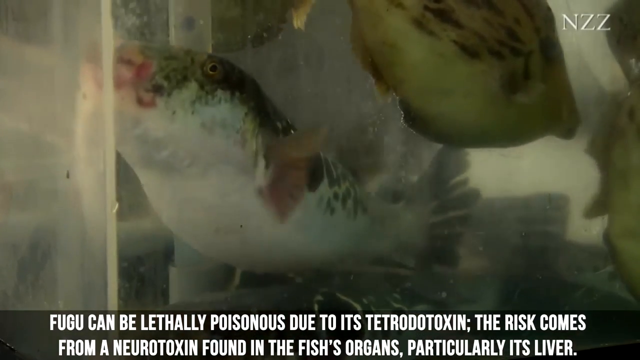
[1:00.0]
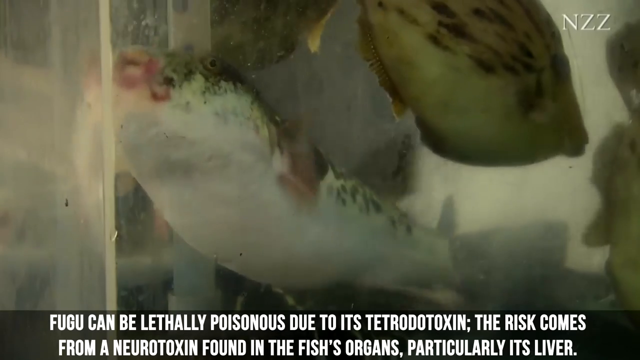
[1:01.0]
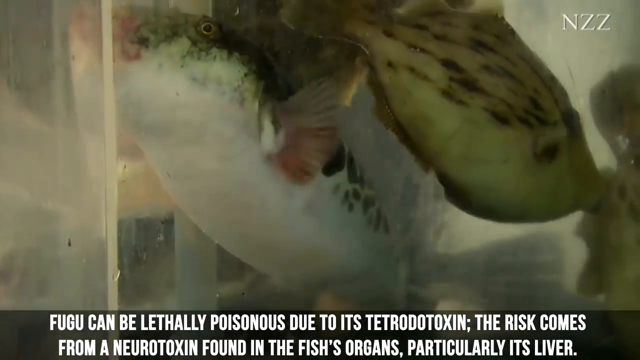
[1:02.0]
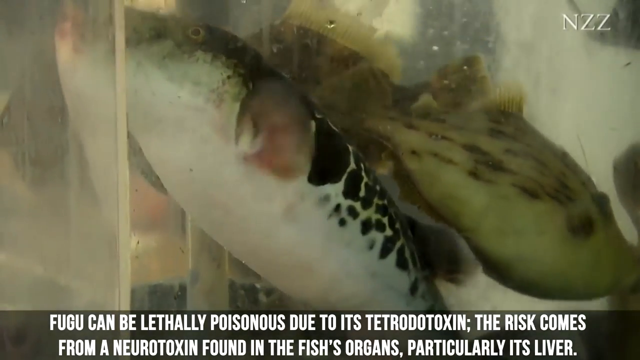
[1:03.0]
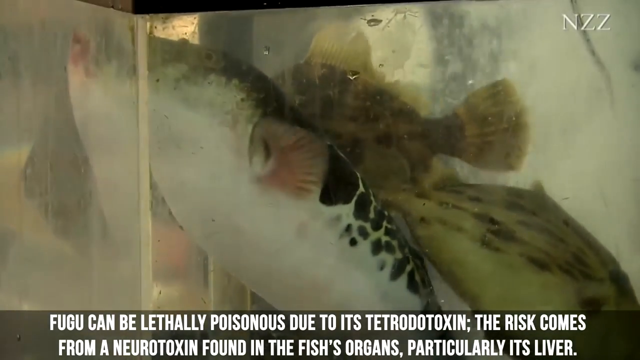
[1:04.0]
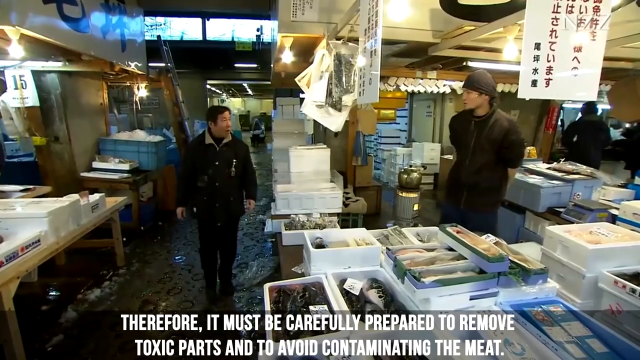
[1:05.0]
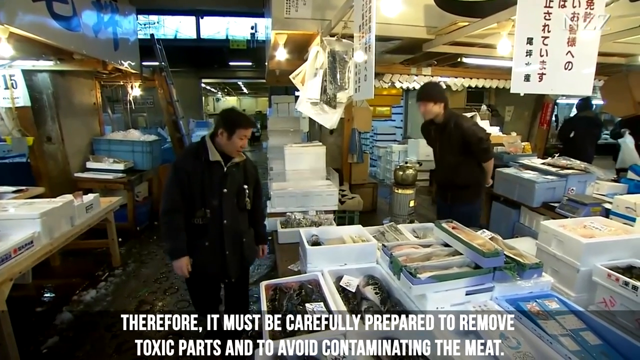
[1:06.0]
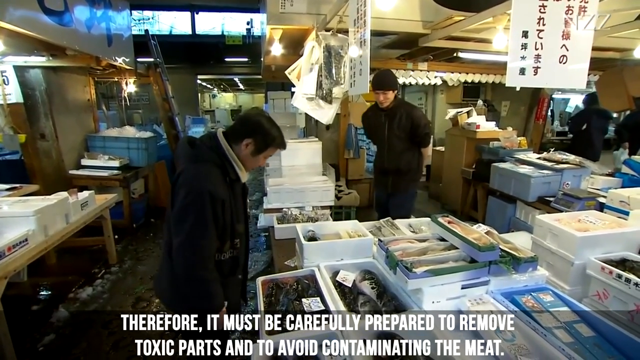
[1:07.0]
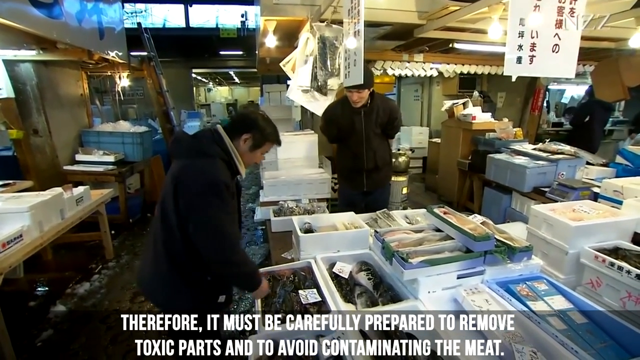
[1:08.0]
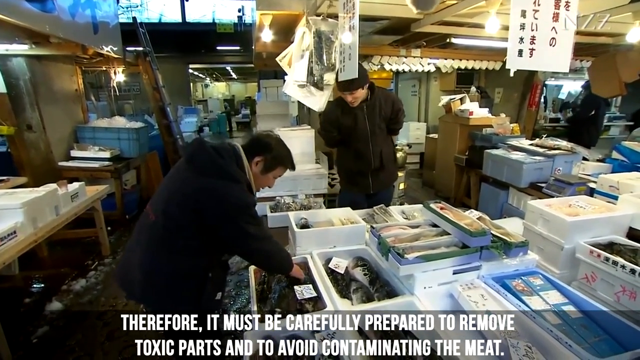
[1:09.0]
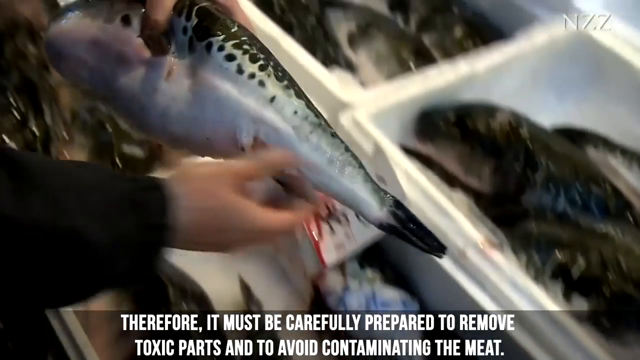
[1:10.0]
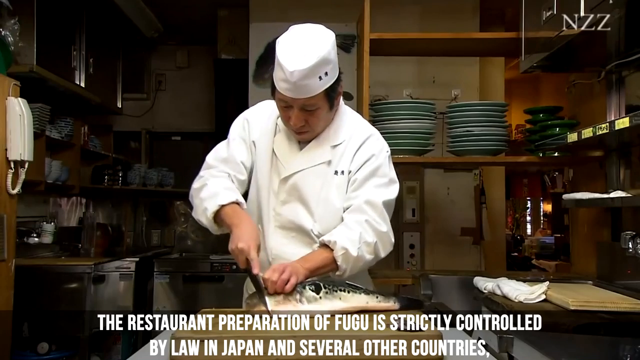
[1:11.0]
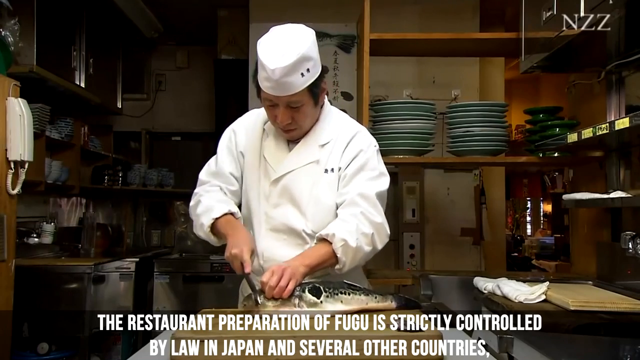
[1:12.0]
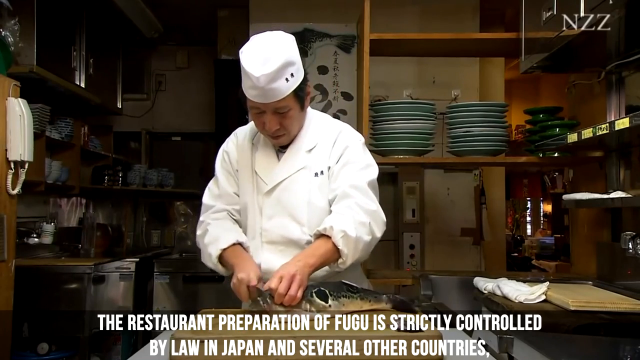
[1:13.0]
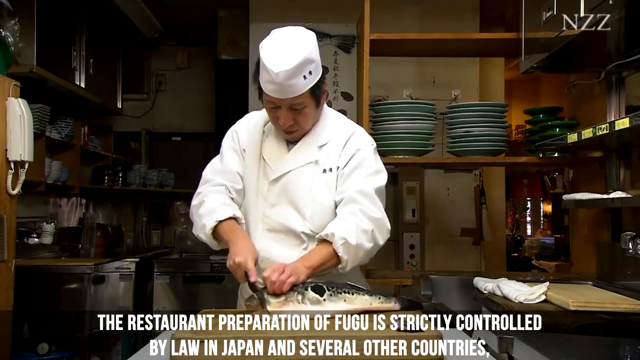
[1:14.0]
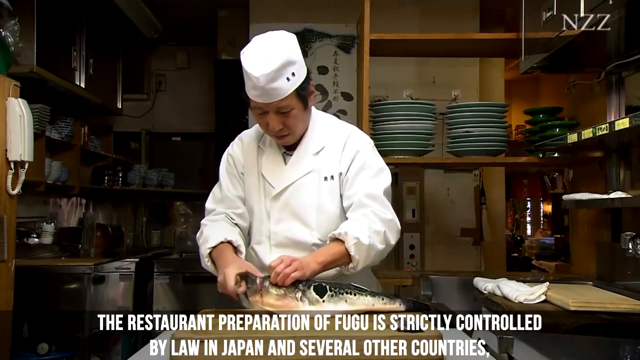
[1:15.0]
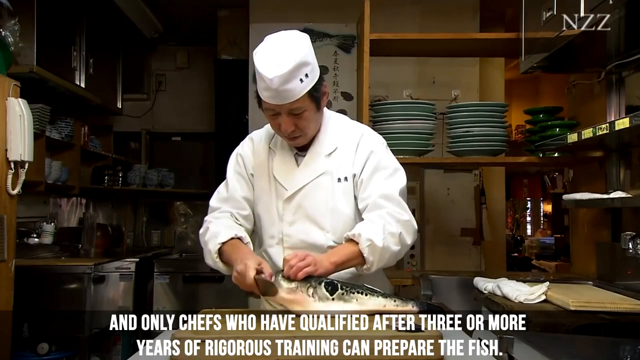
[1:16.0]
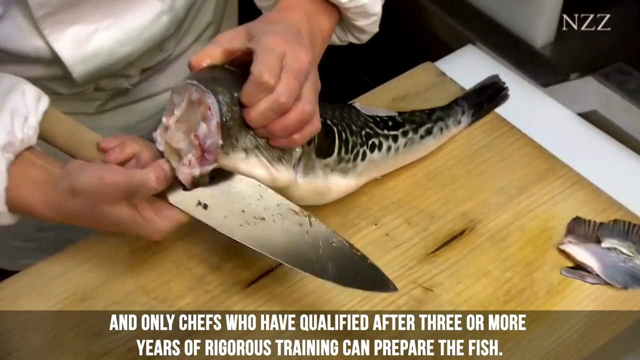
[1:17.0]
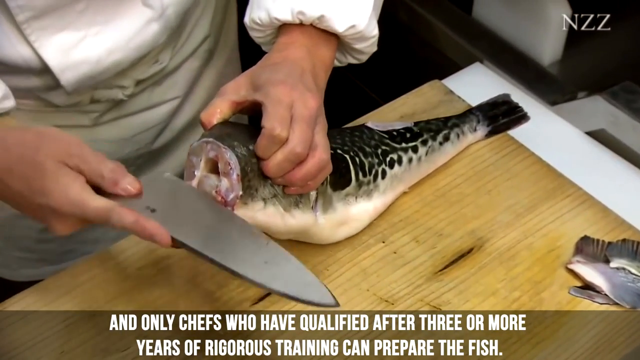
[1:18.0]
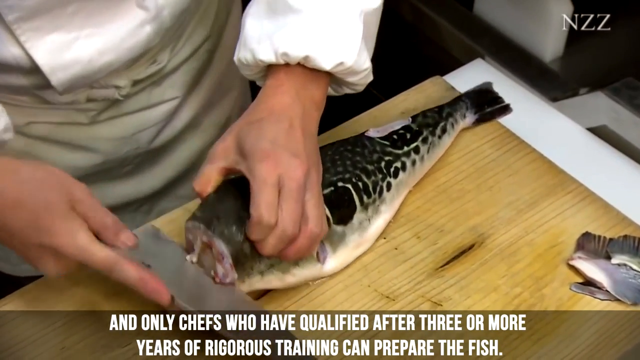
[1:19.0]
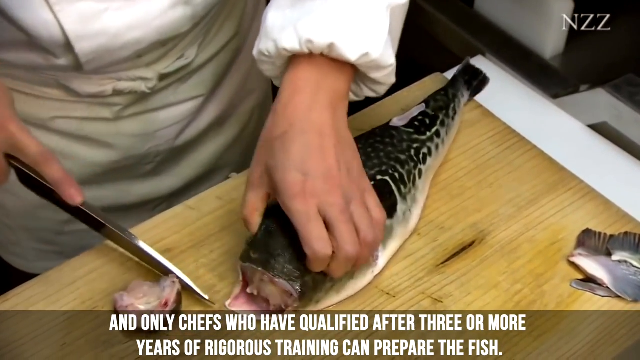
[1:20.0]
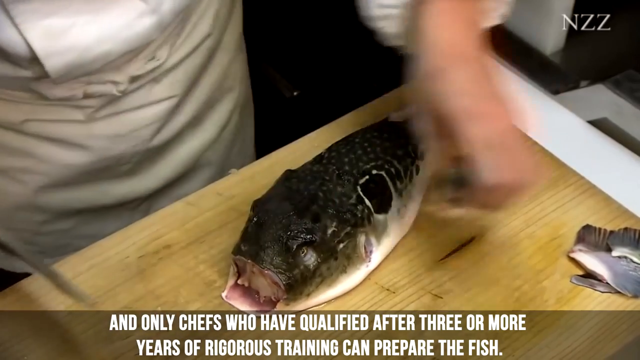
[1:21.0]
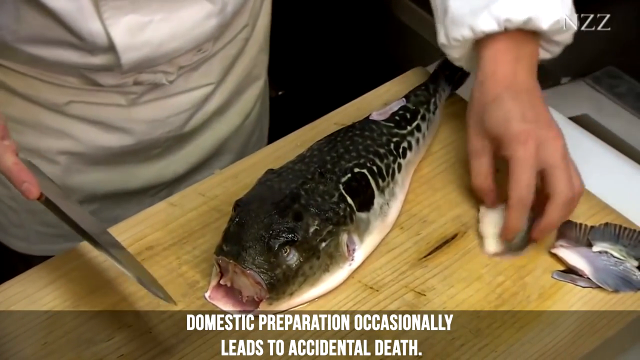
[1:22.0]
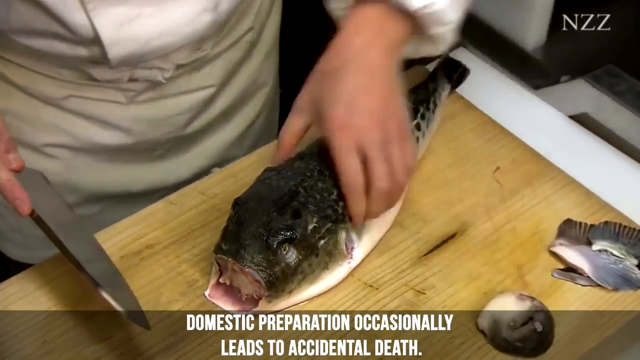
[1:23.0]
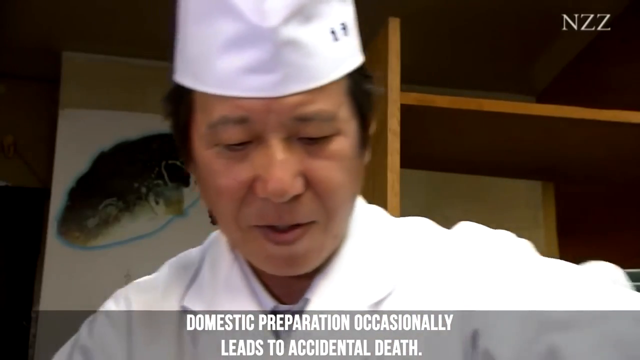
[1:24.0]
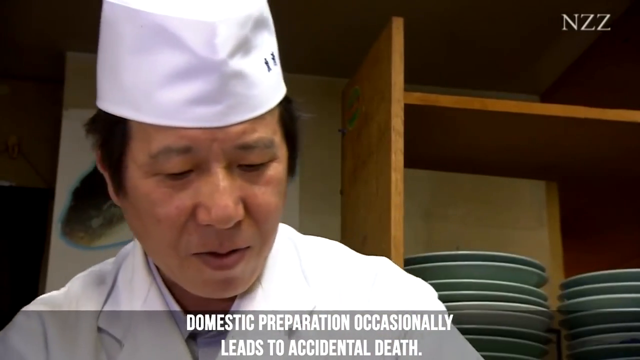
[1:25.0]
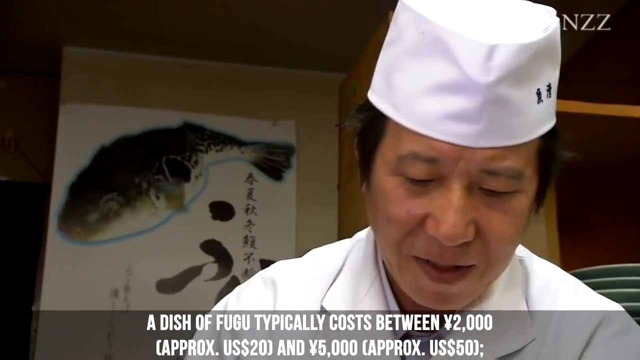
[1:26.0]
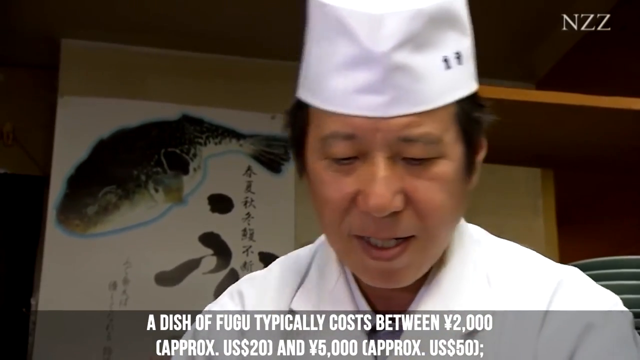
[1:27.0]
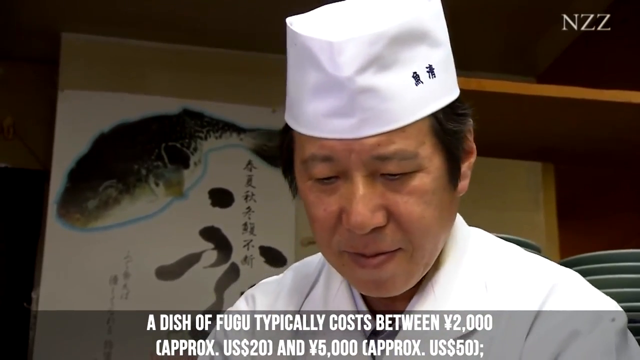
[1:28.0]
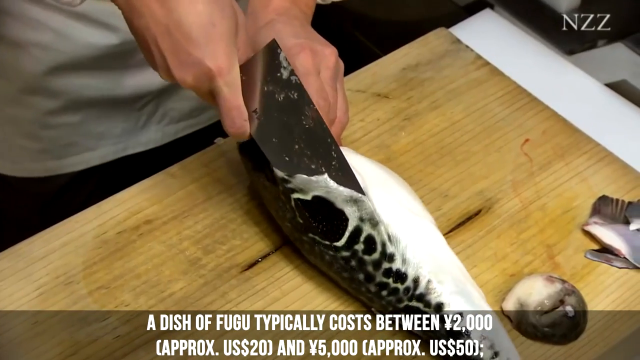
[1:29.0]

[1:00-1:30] The video continues on the puffer fish from Japan and its toxicity to humans, showing images of puffer fish in either fish tanks or what looks like water. A fish market in Japan appears, with people walking around, and the text says "therefore, must be carefully prepared to remove toxic parts to avoid contaminating the" meat. It goes on to say that extracting the meat is a strictly controlled process in Japan and several other countries. Meanwhile, a Japanese chef carefully cuts and prepares a puffer fish; he appears to cut off a piece of the head or mouth and then carefully cuts down the side of it. The text then mentions that a dish of this fish costs between 2,000 and 5,000 yen.